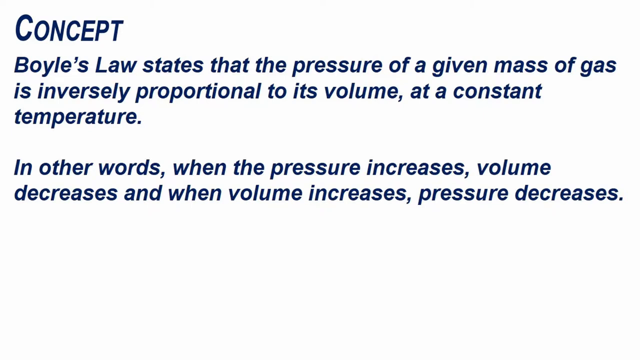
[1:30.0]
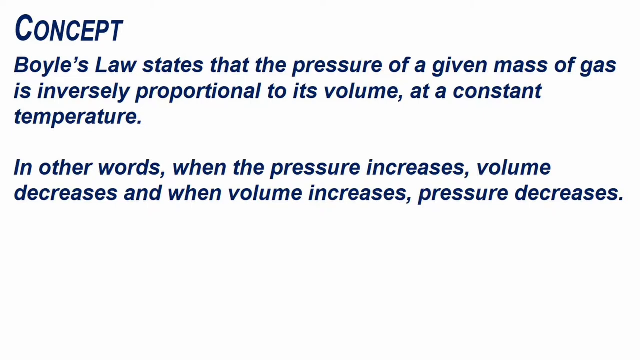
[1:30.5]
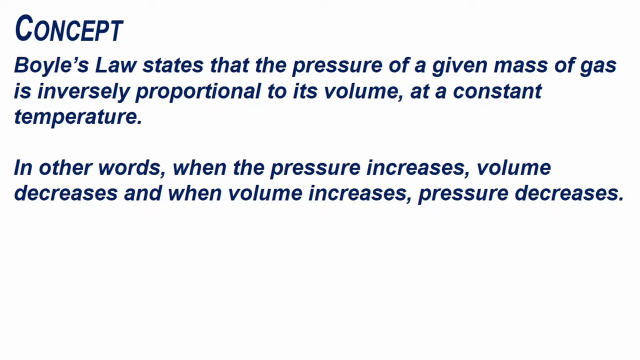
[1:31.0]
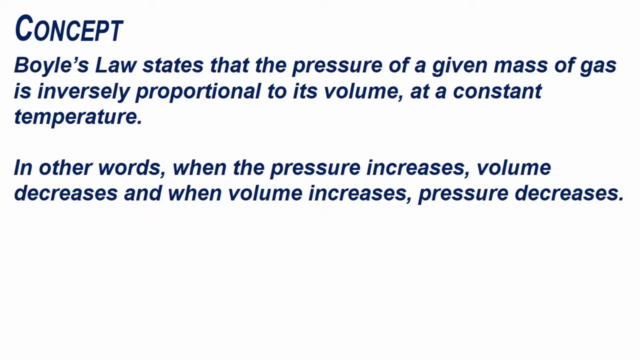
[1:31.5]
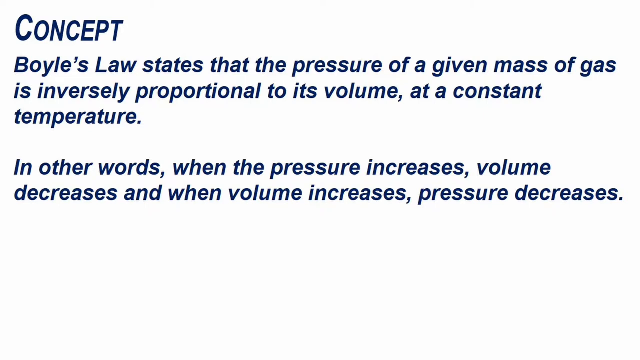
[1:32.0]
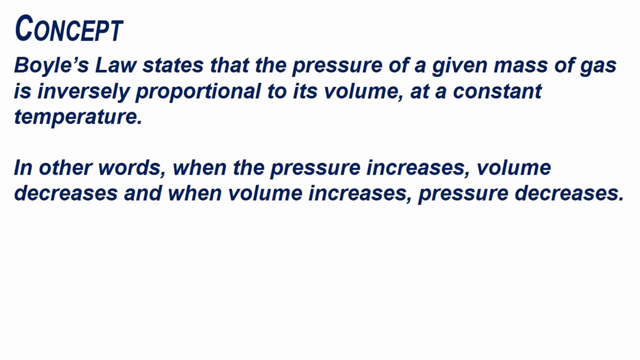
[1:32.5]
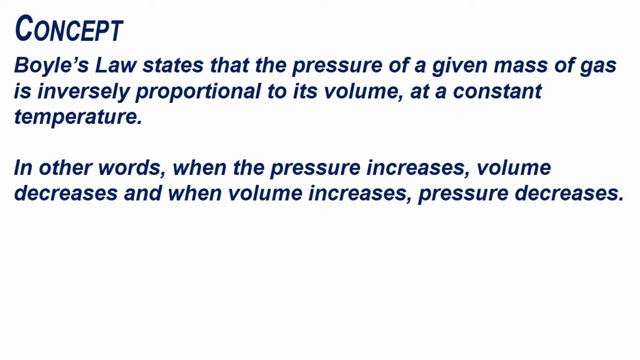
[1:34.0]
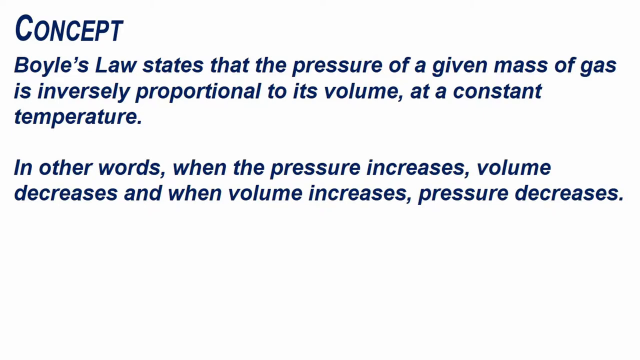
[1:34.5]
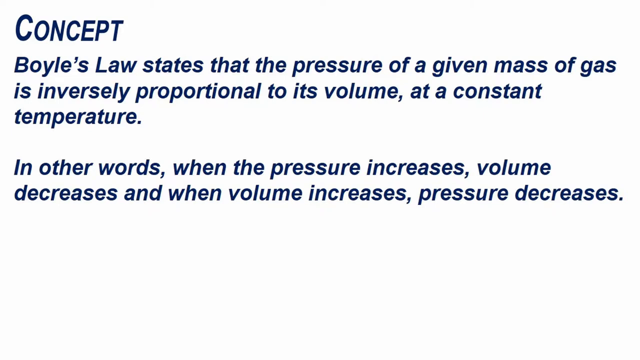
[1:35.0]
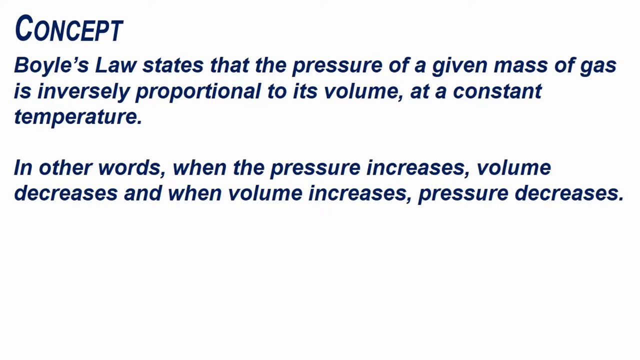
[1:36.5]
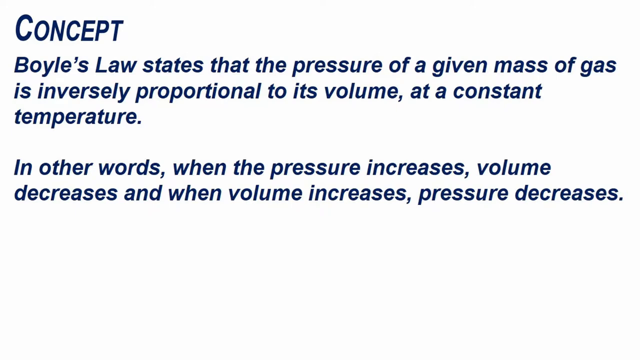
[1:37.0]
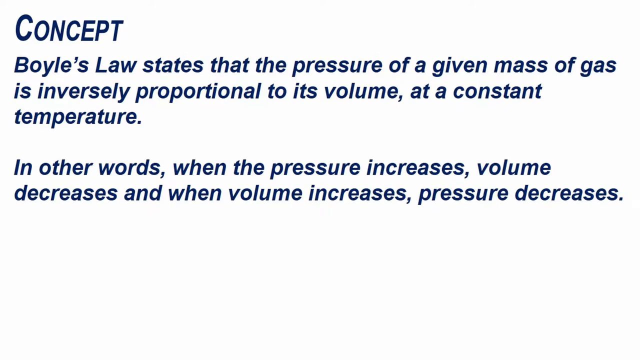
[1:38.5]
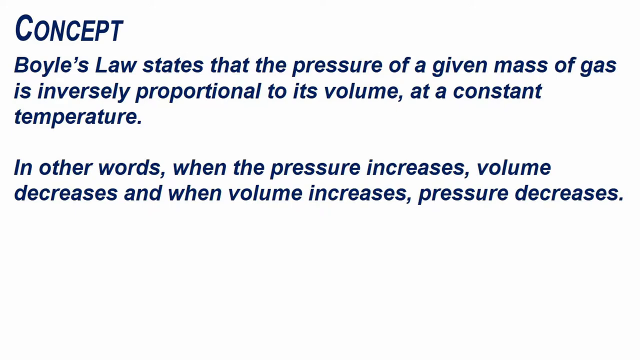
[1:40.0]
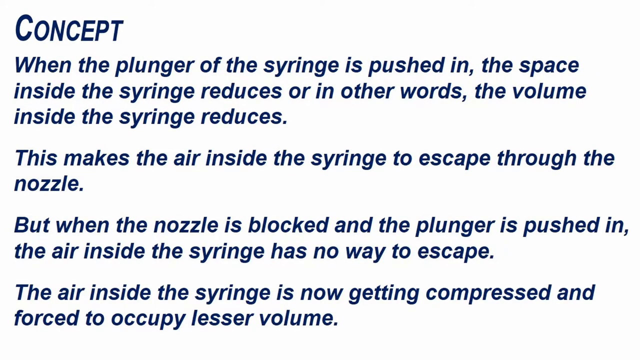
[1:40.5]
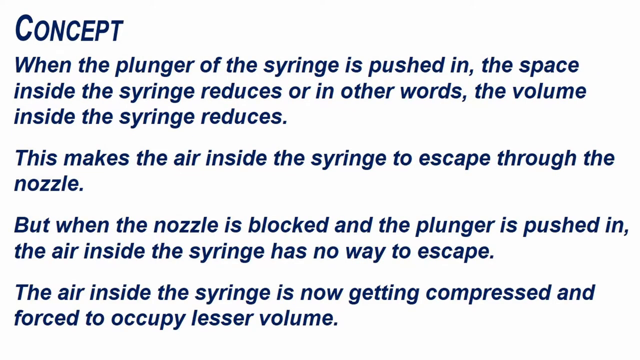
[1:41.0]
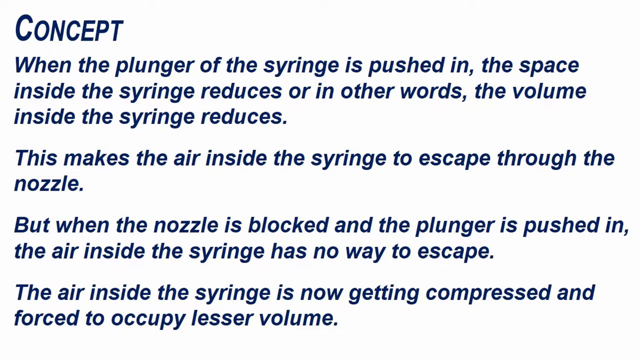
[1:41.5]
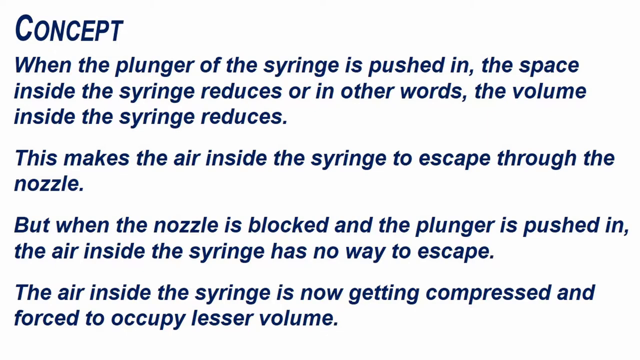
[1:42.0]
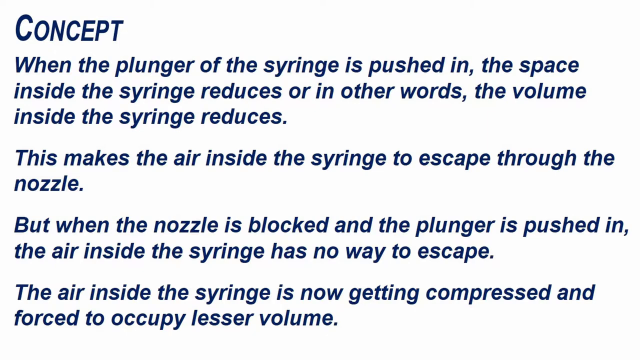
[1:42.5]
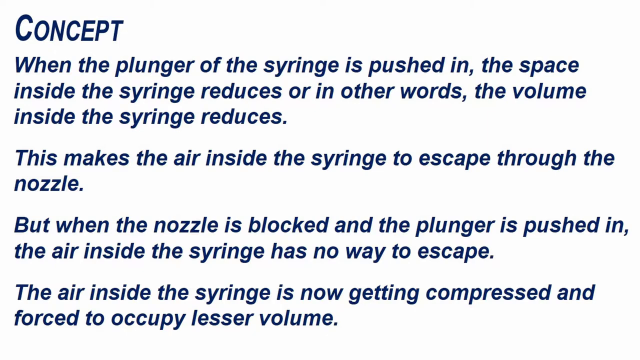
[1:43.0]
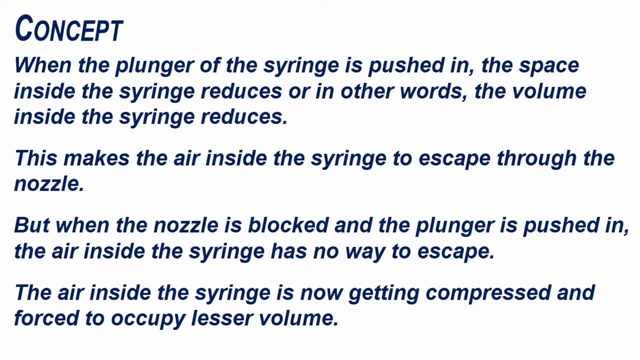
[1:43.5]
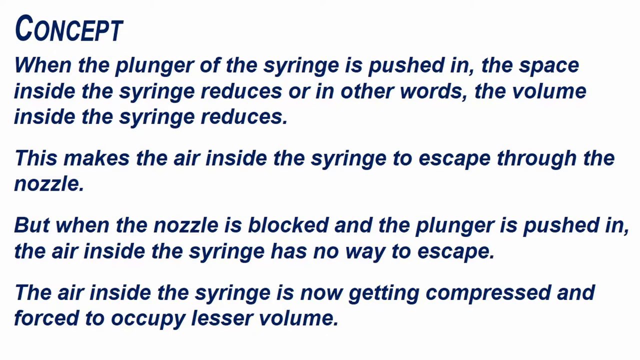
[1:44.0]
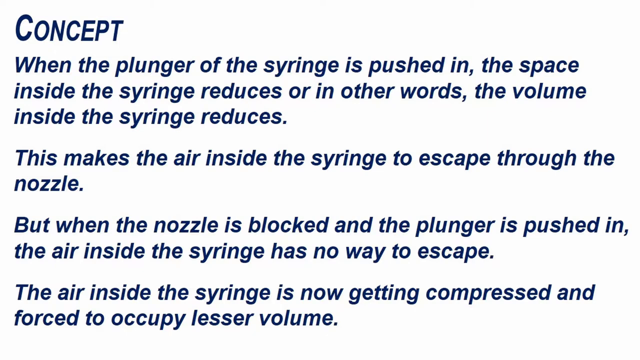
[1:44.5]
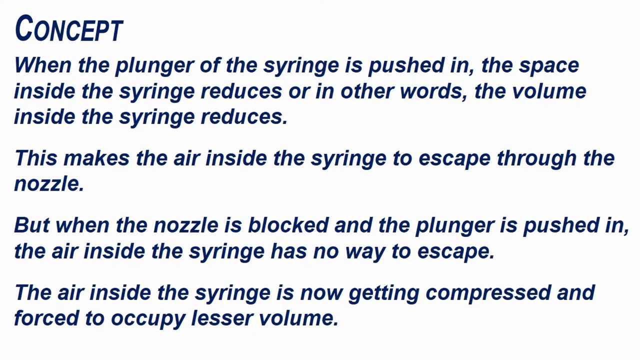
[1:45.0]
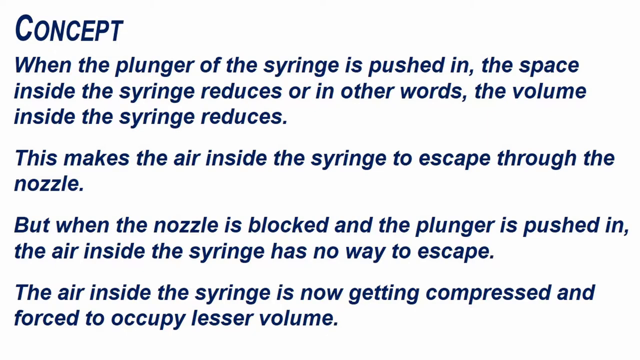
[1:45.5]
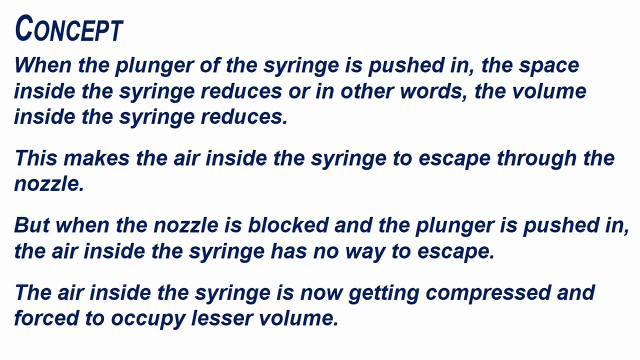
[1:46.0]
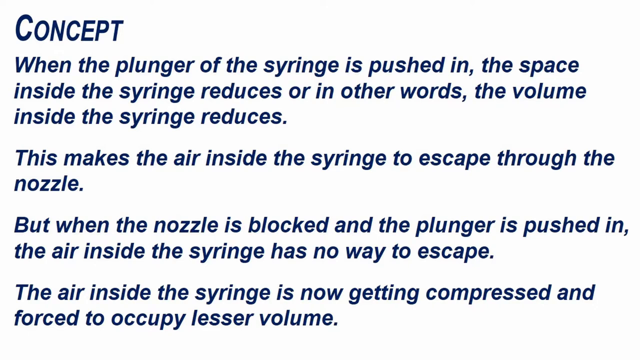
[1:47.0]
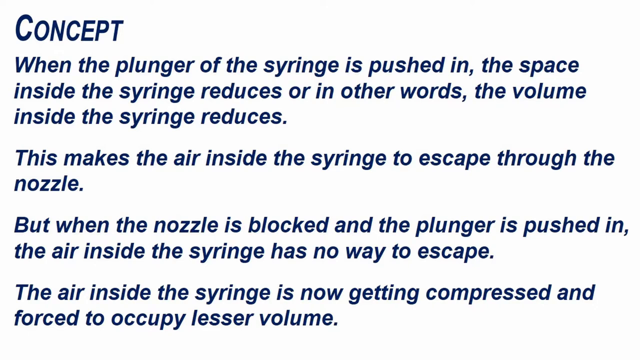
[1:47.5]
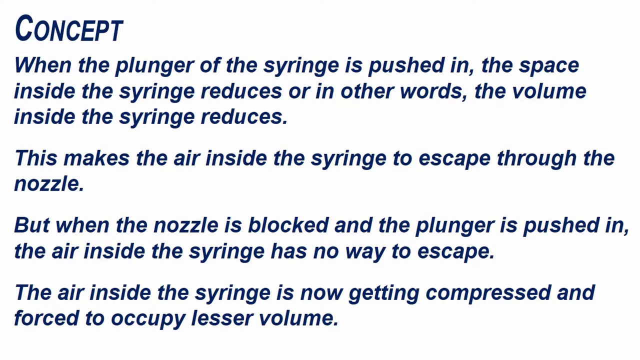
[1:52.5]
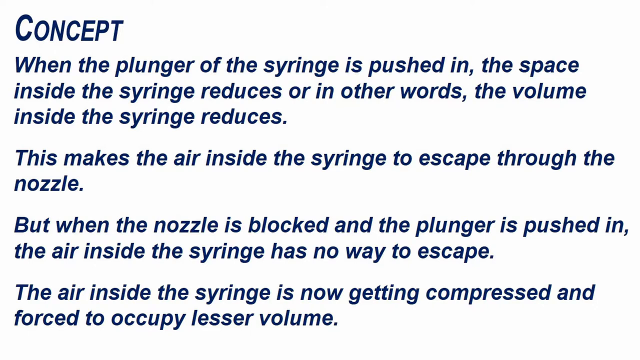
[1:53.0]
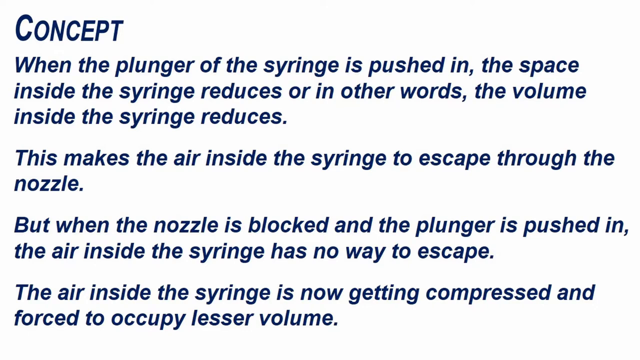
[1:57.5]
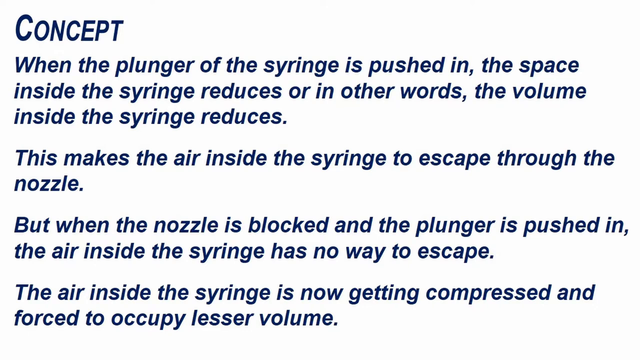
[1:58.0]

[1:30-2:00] The items needed are shown: a clear 20 ml syringe, a red balloon, and a white thread. Next, the clear syringe and the red balloon, inflated a little and tied with the white thread, are shown. The person takes the plunger out of the syringe, inserts the red balloon, and pushes the plunger, making the balloon go up while the syringe's nozzle is closed. As it rises, the balloon gets smaller and smaller until at some point it stops; the pressure looks like it is pulling the plunger down, since the person holding the syringe is no longer pushing it, and the balloon stops by itself in the middle of the syringe. The video then explains Boyle's law and encourages viewers to try this at home.